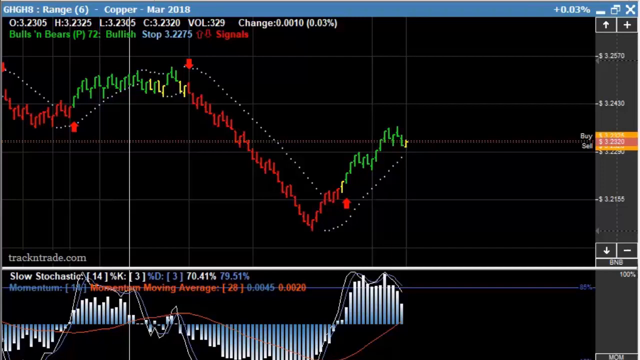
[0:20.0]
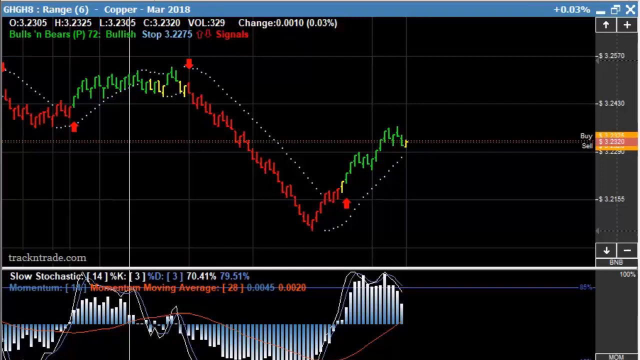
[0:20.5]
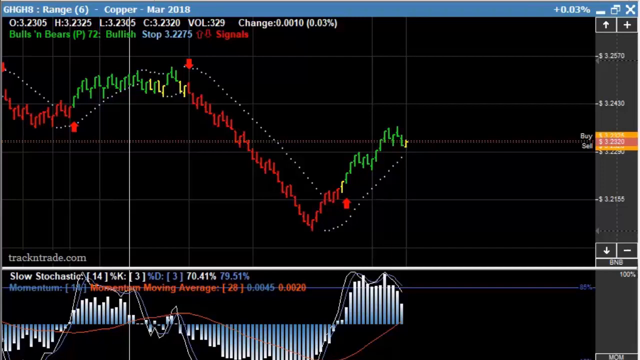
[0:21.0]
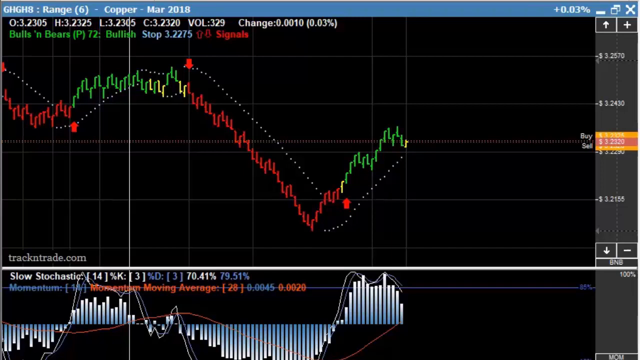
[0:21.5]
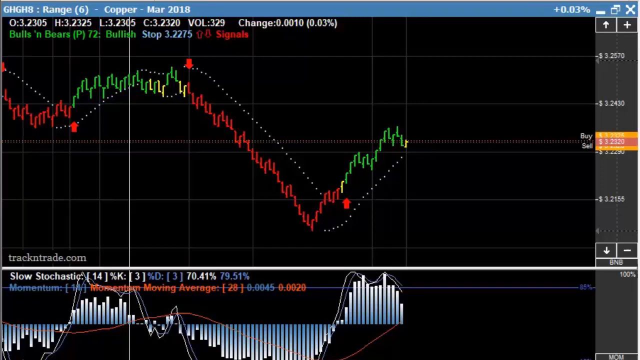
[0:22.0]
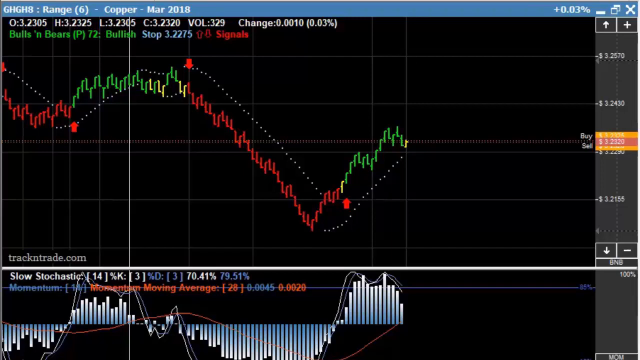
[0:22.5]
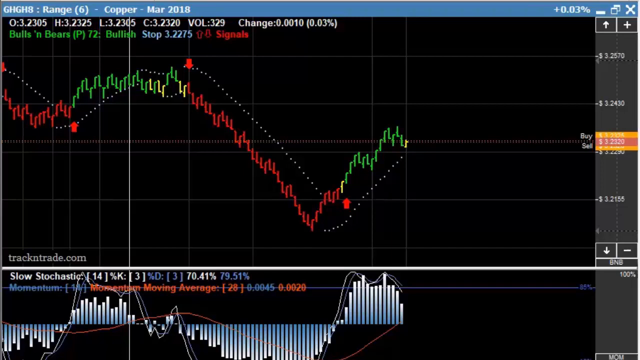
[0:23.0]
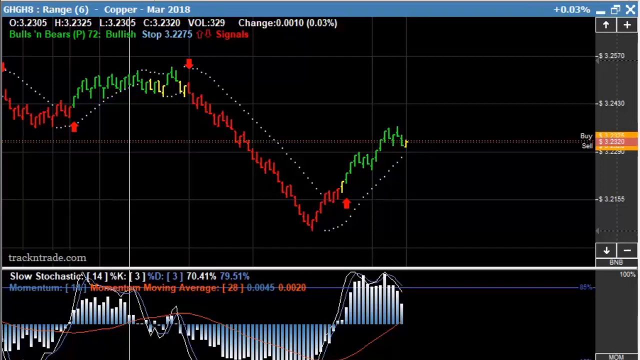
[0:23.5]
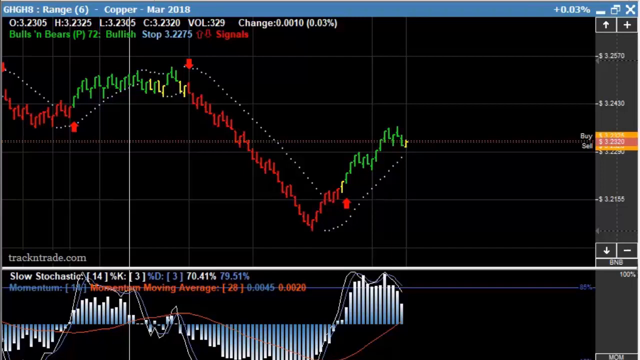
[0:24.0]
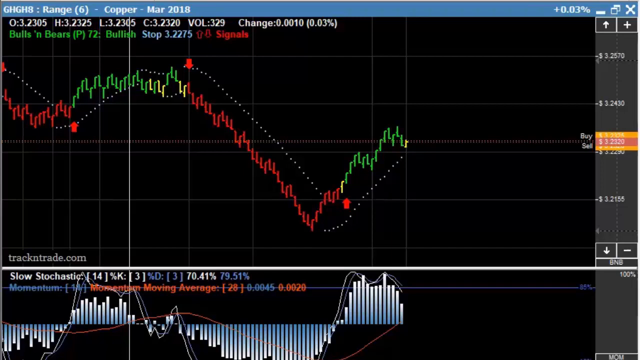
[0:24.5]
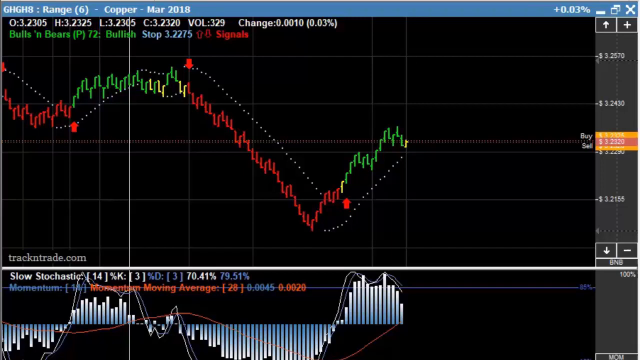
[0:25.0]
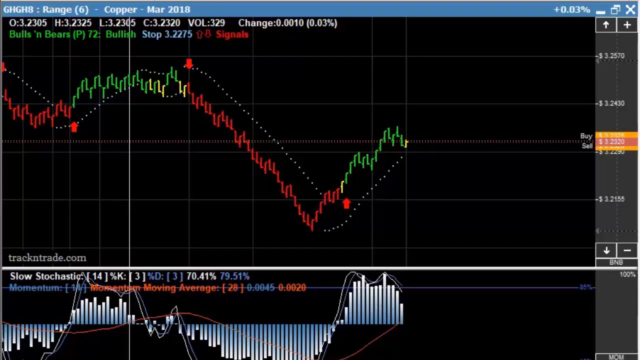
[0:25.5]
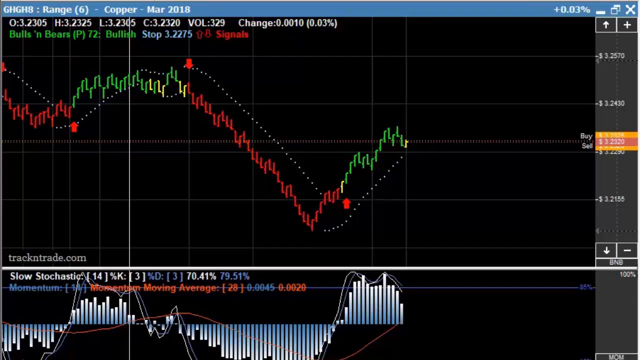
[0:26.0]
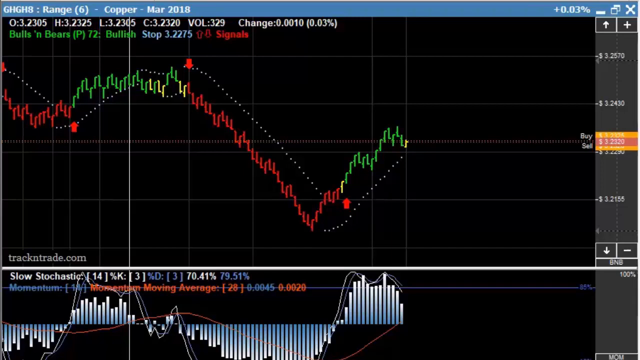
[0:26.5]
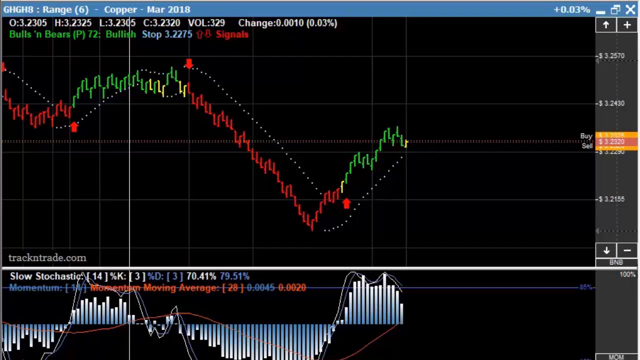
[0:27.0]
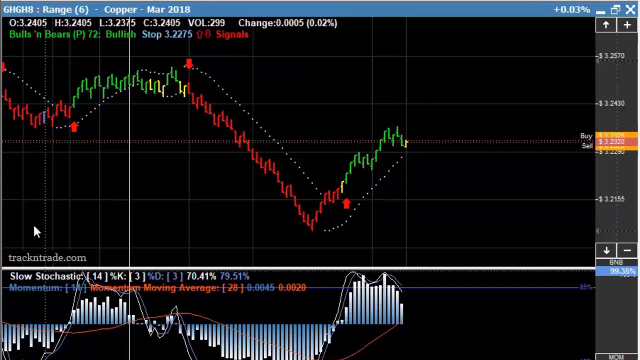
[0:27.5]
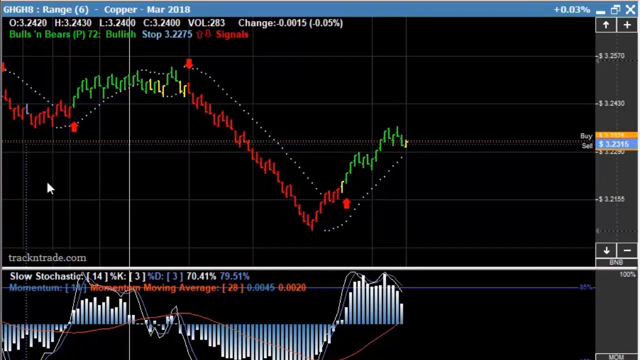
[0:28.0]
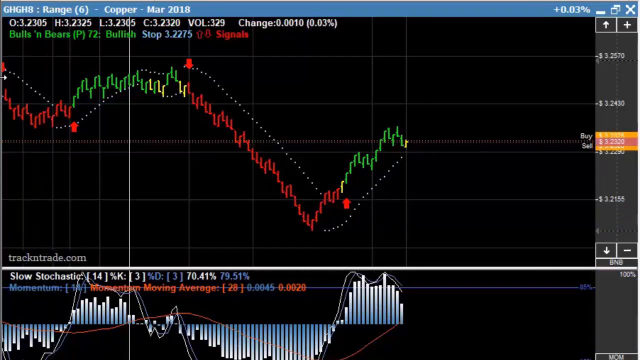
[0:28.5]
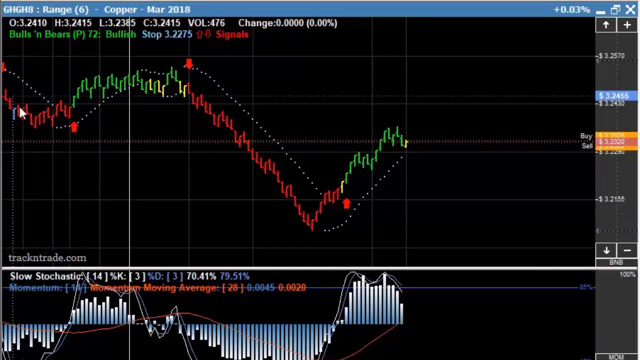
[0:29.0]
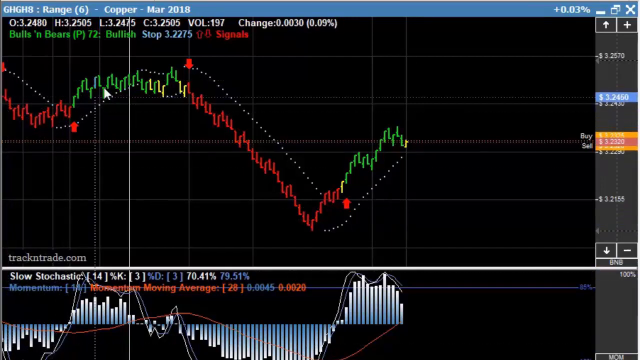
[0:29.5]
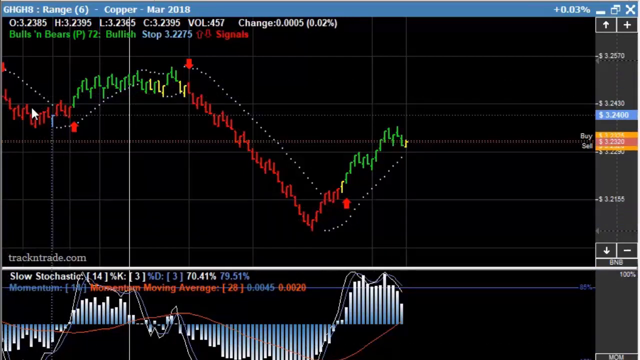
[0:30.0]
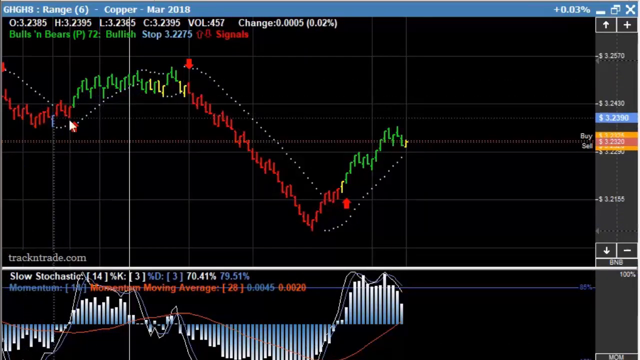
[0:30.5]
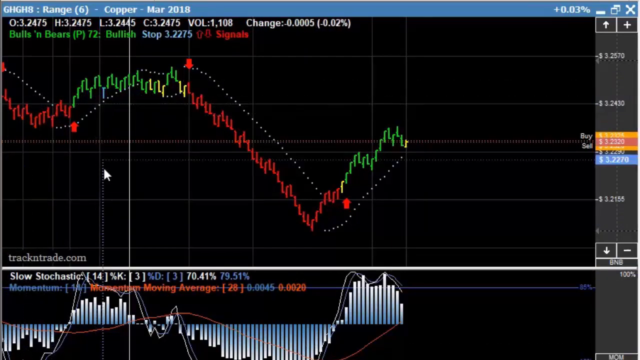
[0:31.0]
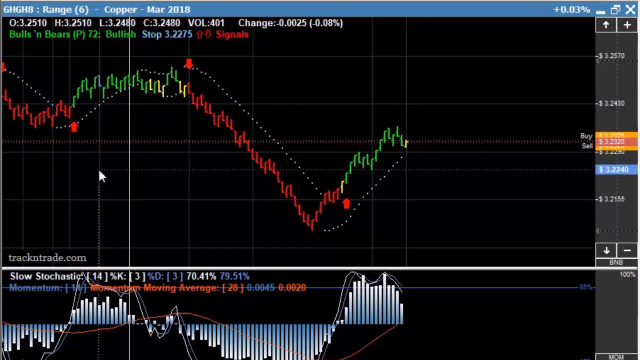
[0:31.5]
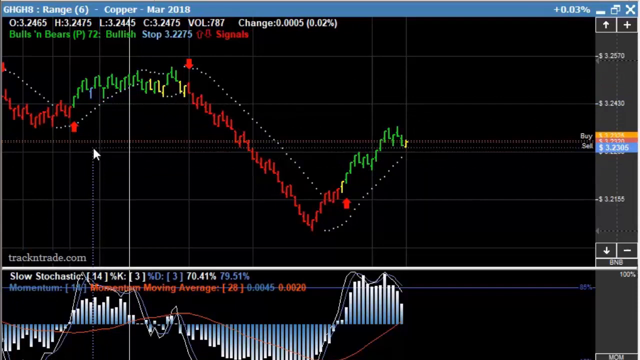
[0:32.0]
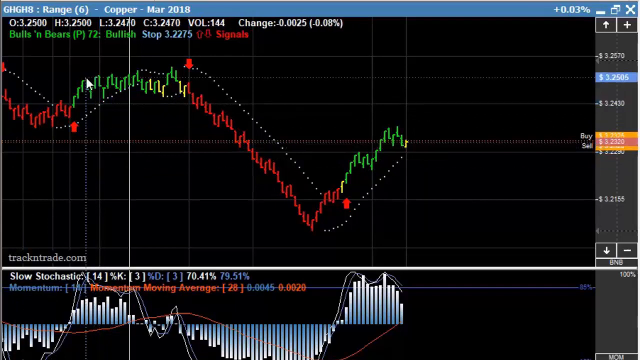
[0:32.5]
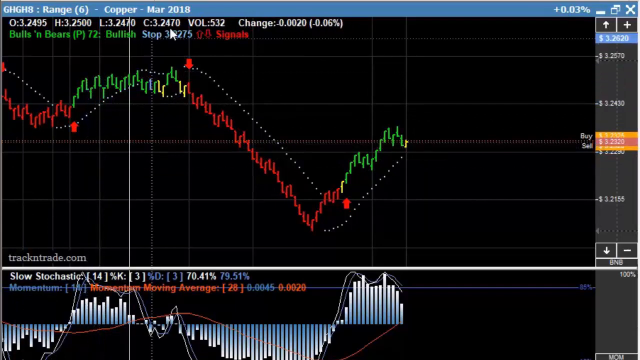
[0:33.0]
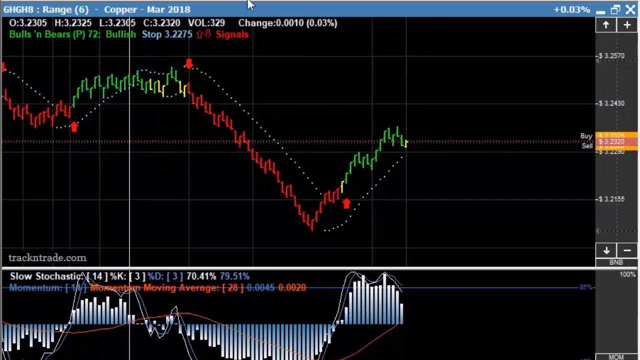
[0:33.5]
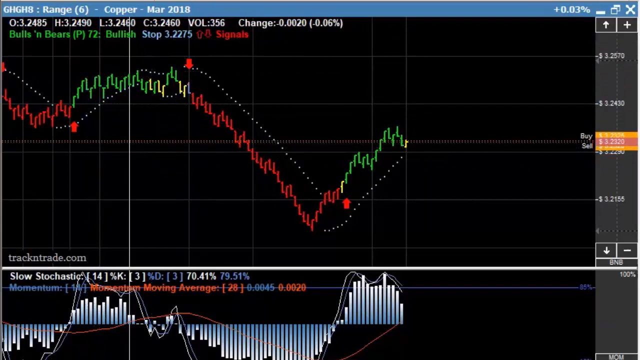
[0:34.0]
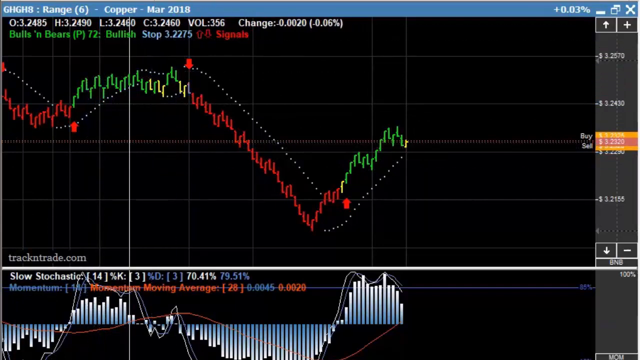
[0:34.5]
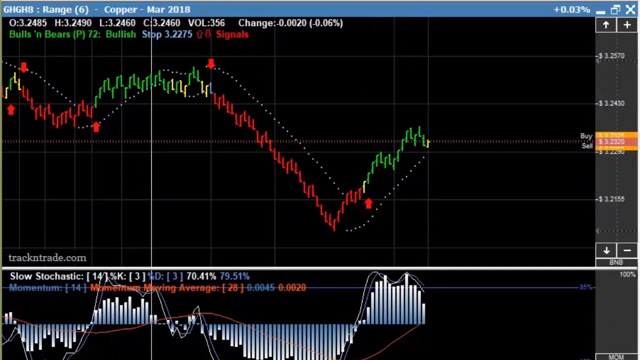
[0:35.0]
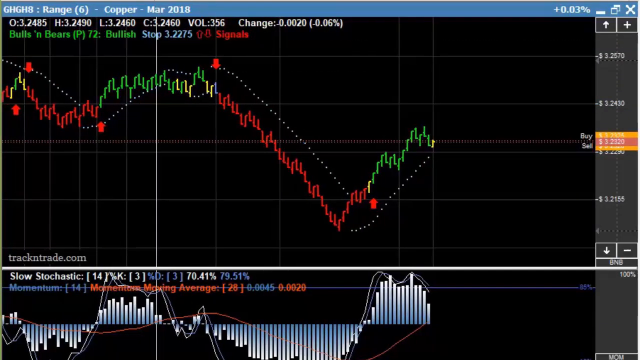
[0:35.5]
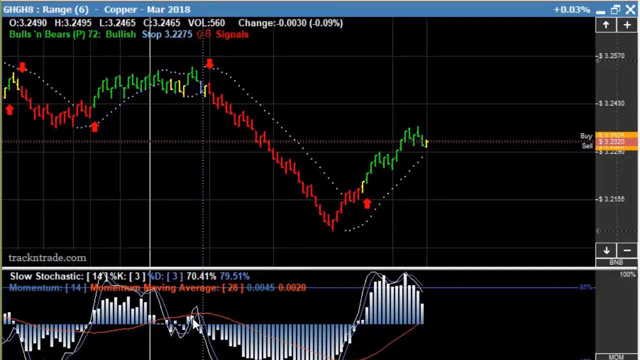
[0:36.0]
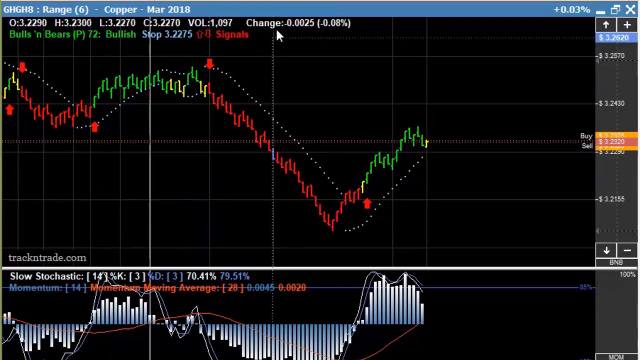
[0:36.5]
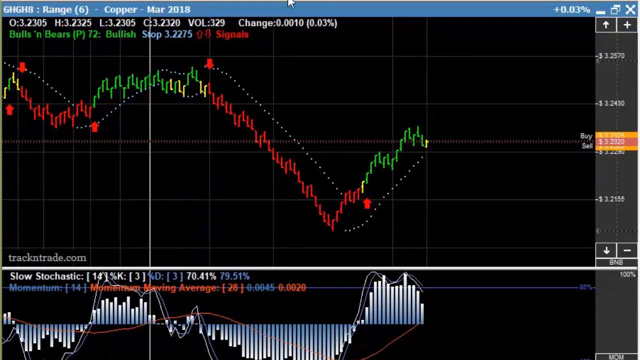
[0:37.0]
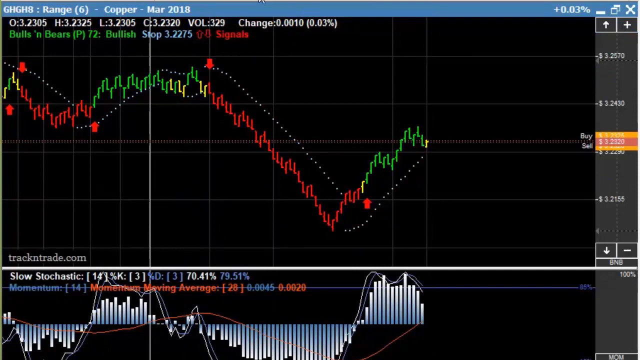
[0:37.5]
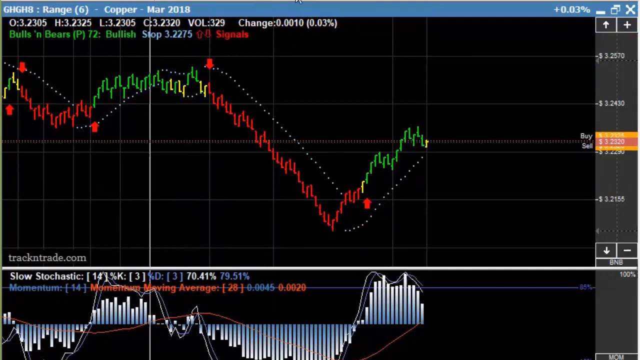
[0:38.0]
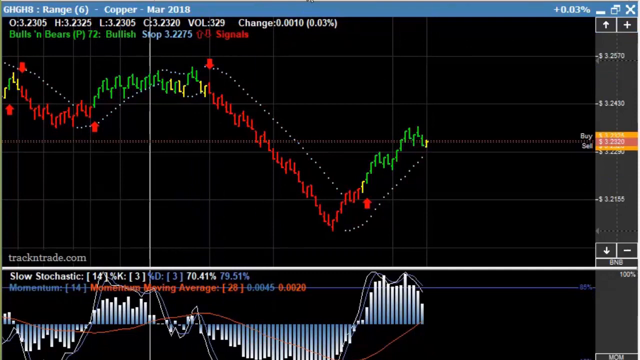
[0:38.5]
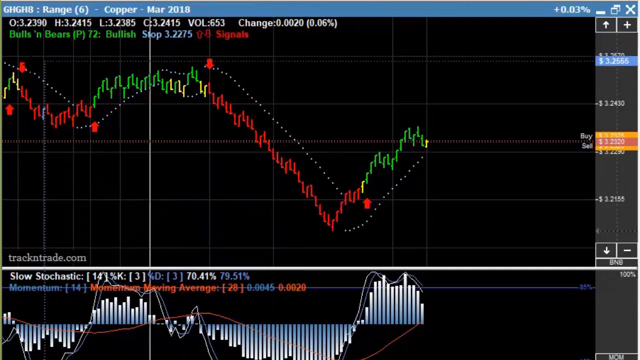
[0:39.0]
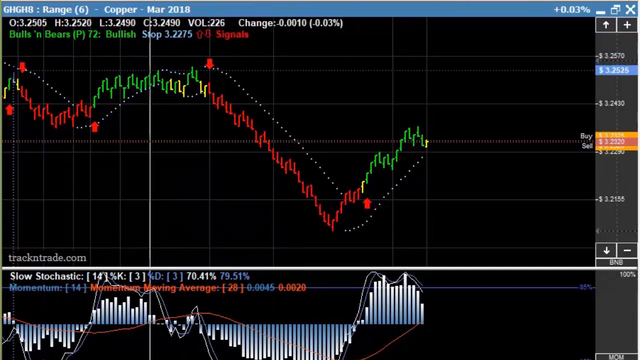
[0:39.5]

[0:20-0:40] The profit and loss graph is on screen. A light blue bar runs all the way across the top of the screen and reads "GHGH8: range" followed by "six.copper.mar 2018" in parentheses. Toward its right-hand side are a plus sign, "0.03%", a minus sign, a double window sign, and an X to close the program. The mouse moves up and follows the graph of the price, profit, and loss trend. There is also movement on the right-hand side of the screen, where the numerals are difficult to make out: one is highlighted in blue, and lower down there is one highlighted in orange, then one in red, and then one in orange. These shift up and down depending on where the mouse is on the graph. A white bar separates the top red and green graph from the silver wave graph below.